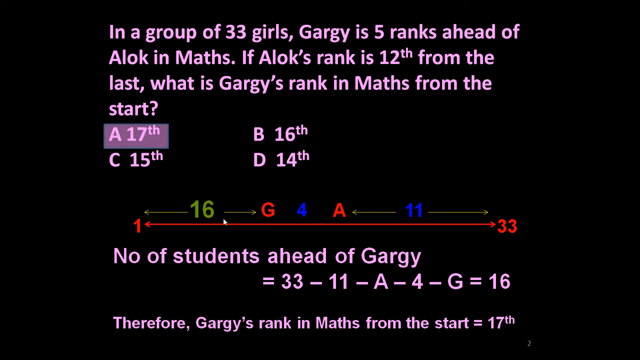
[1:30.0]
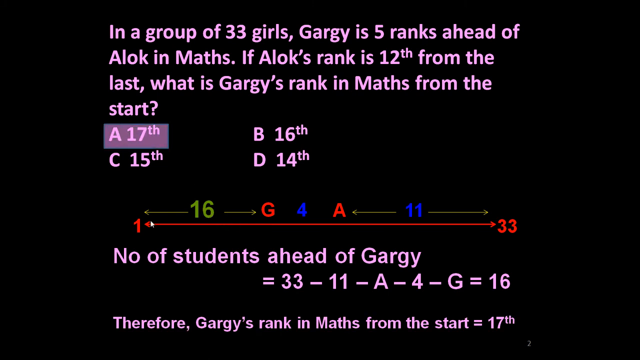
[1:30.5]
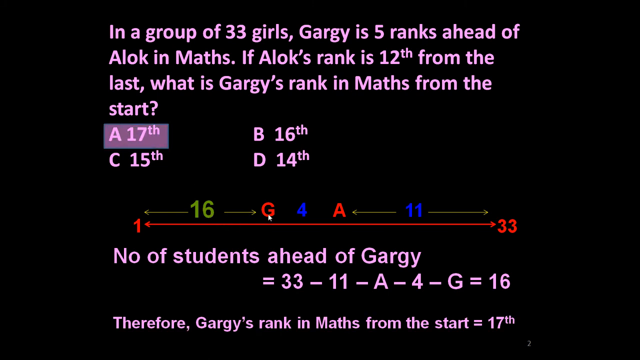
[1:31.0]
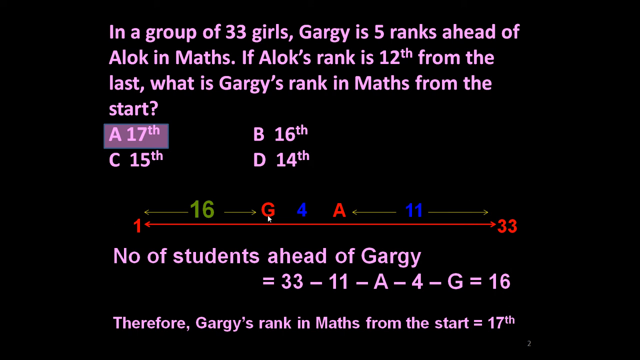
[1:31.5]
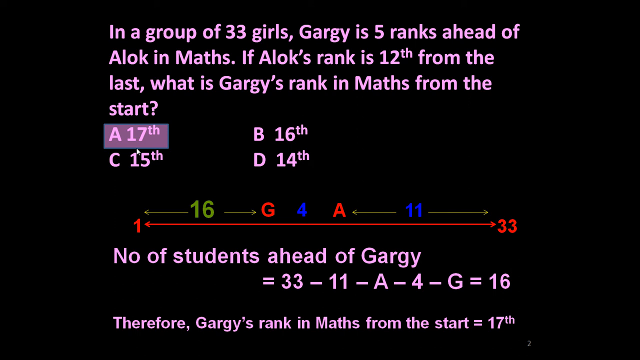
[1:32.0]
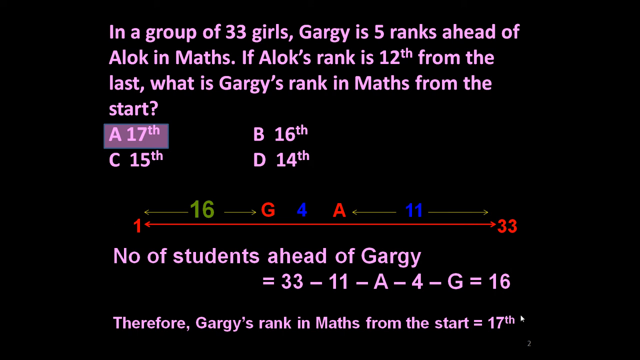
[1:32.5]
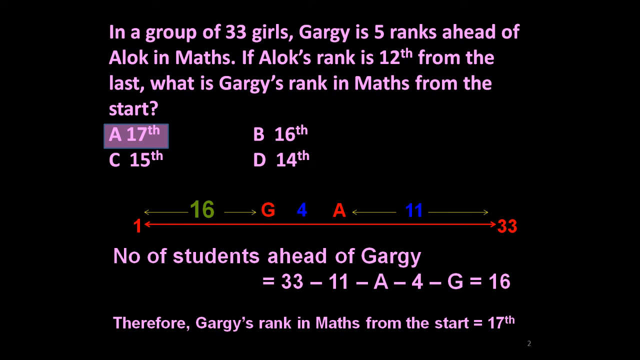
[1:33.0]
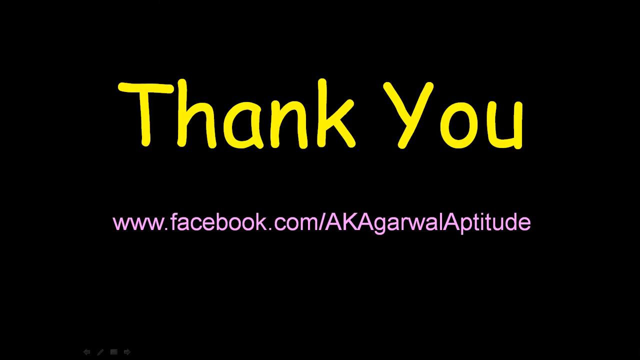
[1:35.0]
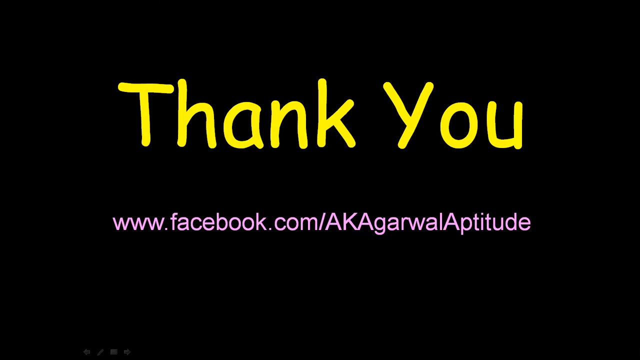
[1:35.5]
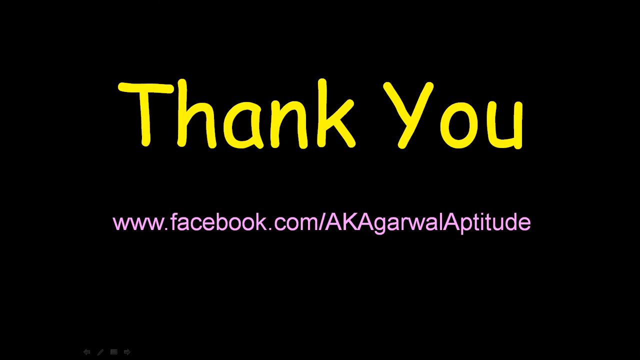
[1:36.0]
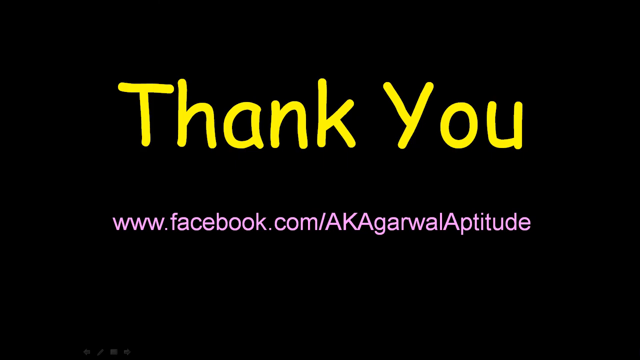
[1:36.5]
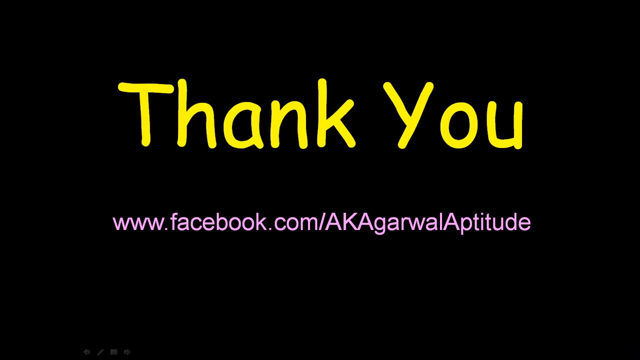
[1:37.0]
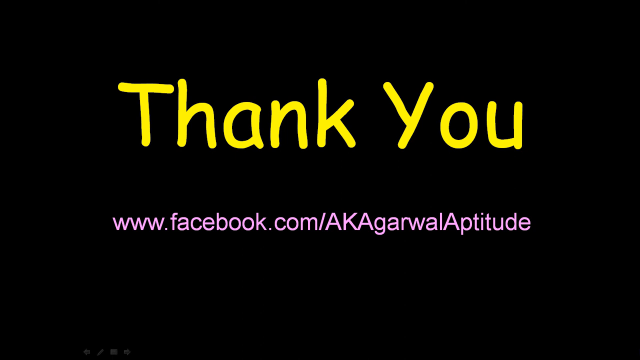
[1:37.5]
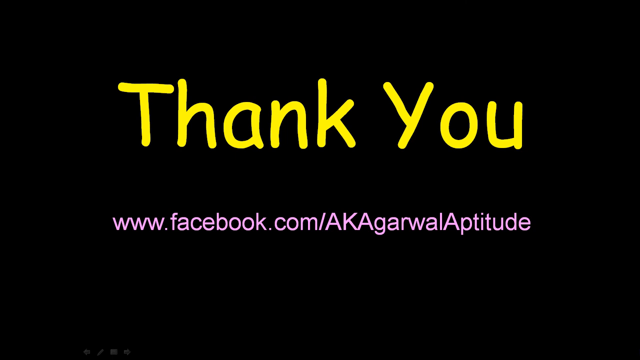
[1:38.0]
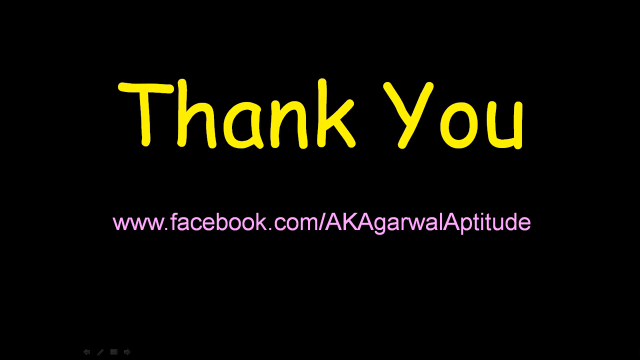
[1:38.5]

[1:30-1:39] The solution concludes that the answer is 17. An end screen from A. K. Agarwal Aptitude then says thank you and promotes his Facebook channel.